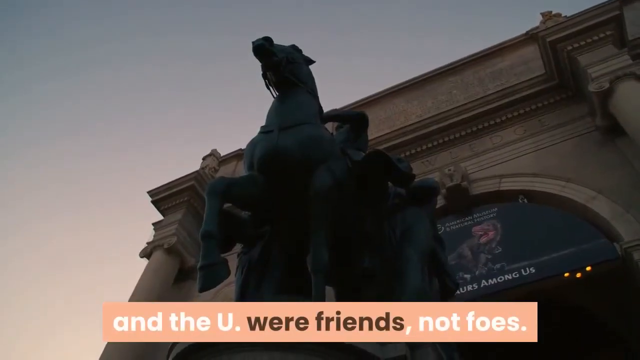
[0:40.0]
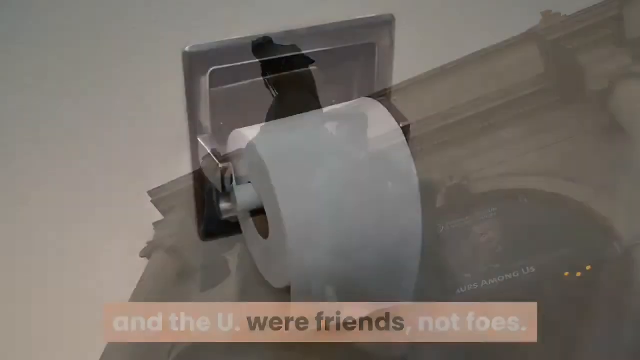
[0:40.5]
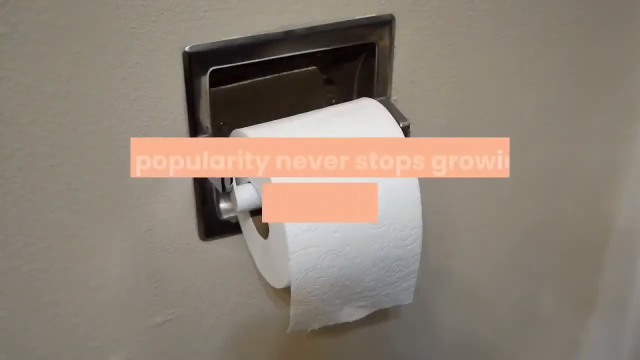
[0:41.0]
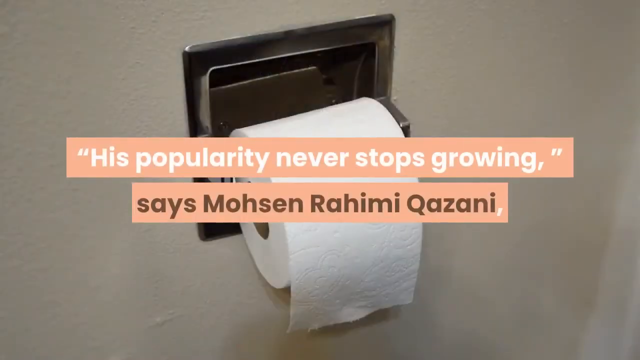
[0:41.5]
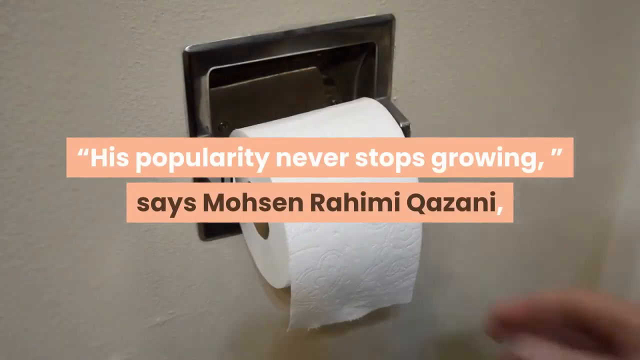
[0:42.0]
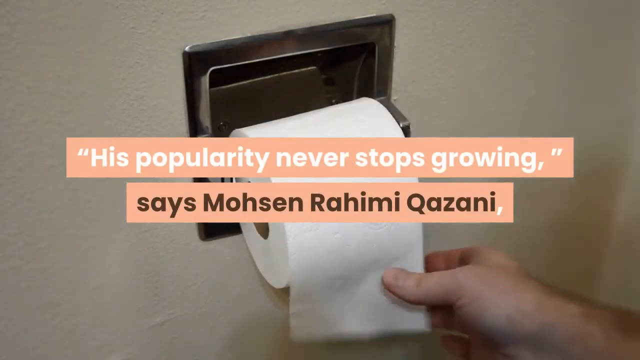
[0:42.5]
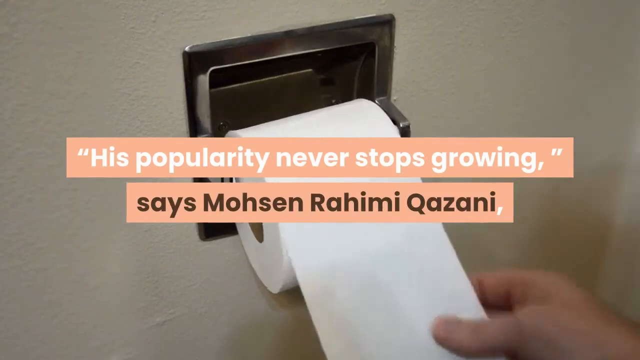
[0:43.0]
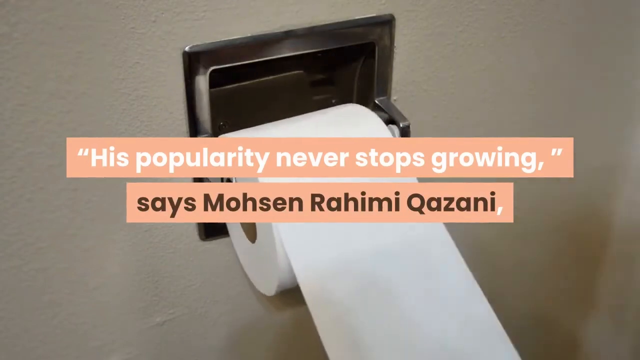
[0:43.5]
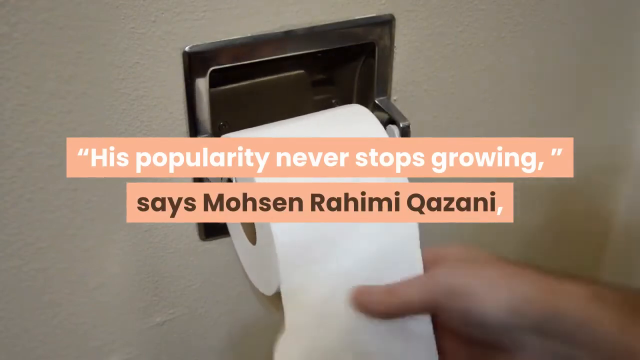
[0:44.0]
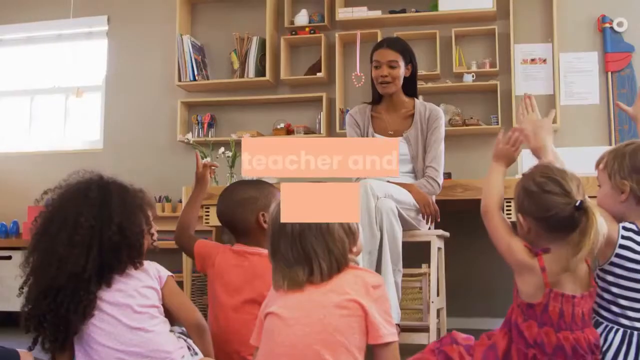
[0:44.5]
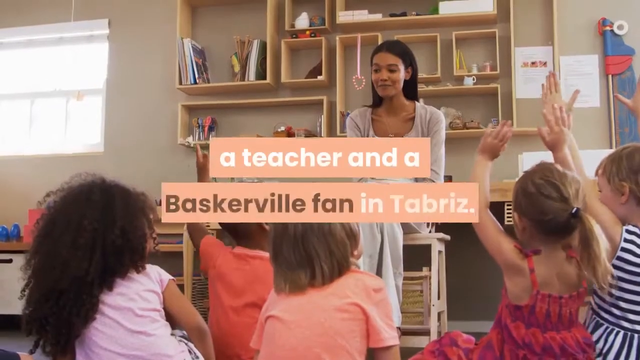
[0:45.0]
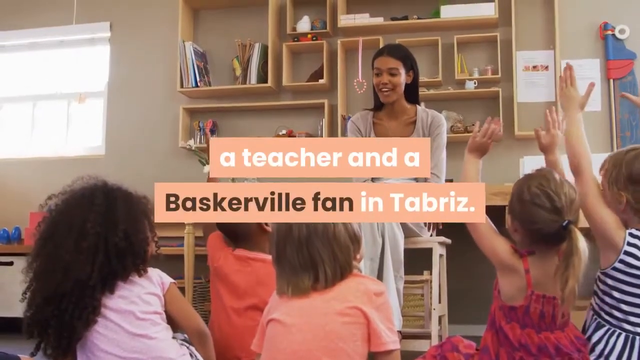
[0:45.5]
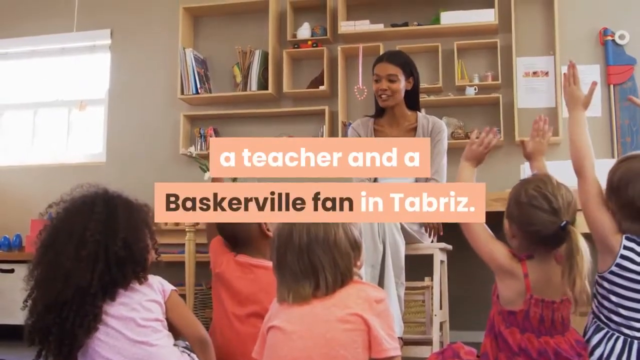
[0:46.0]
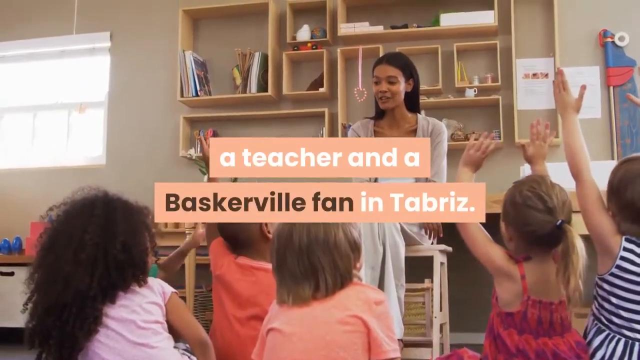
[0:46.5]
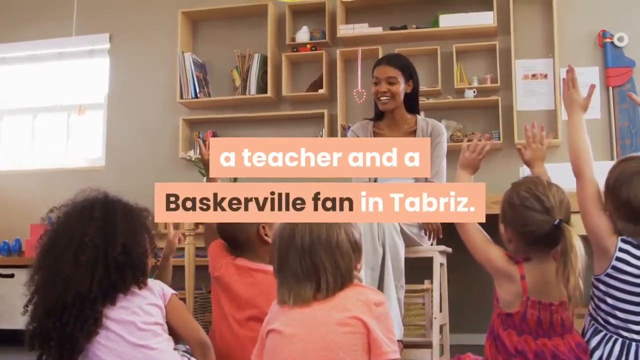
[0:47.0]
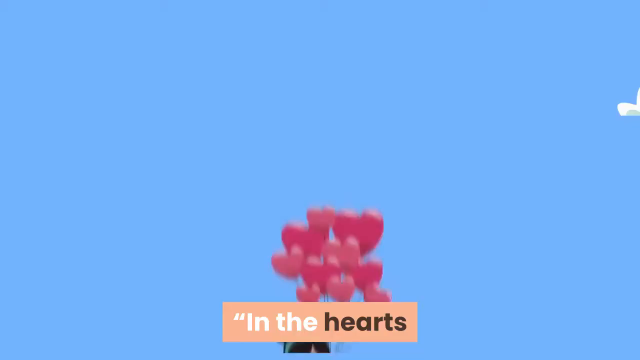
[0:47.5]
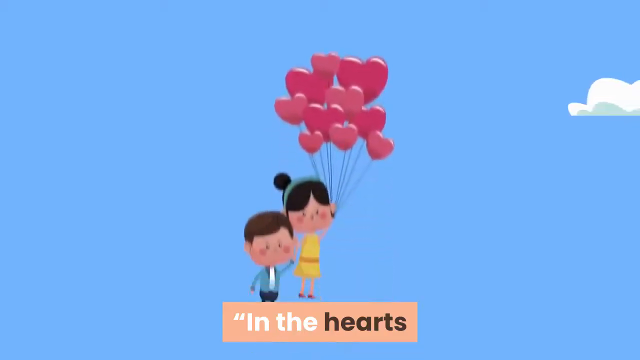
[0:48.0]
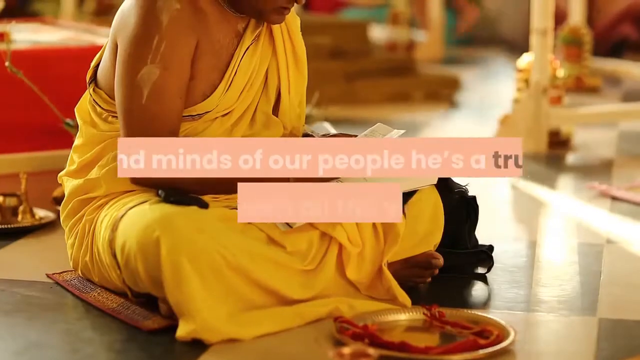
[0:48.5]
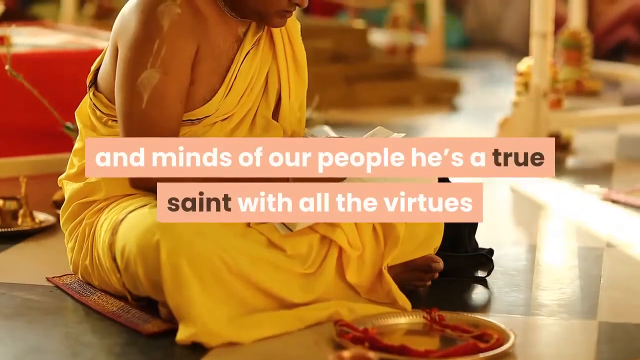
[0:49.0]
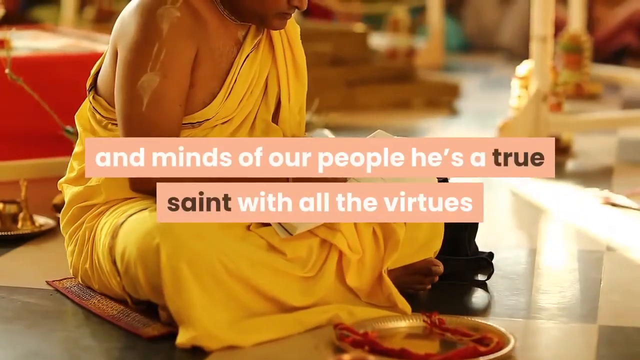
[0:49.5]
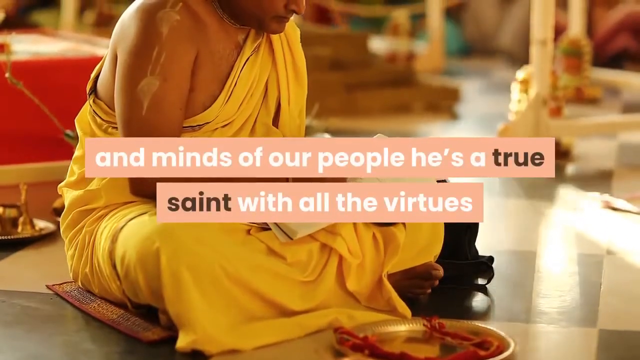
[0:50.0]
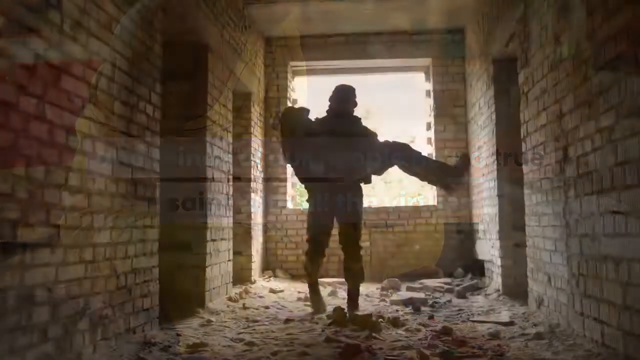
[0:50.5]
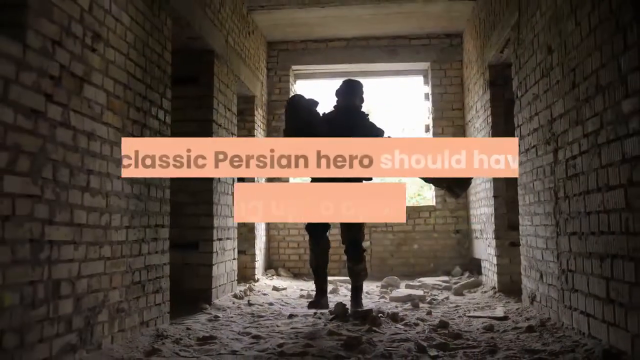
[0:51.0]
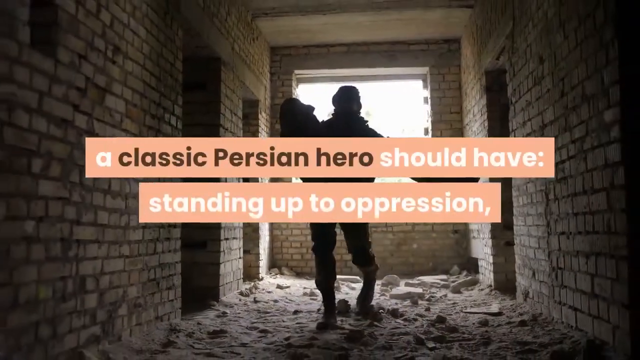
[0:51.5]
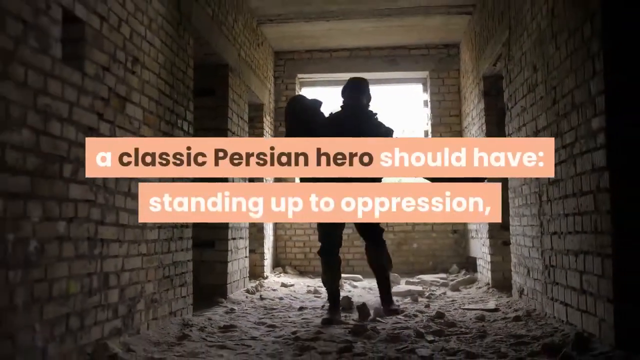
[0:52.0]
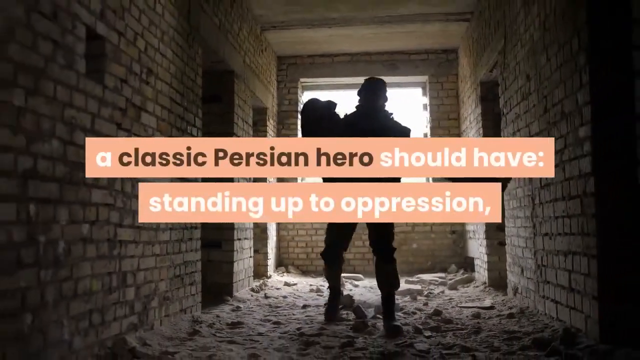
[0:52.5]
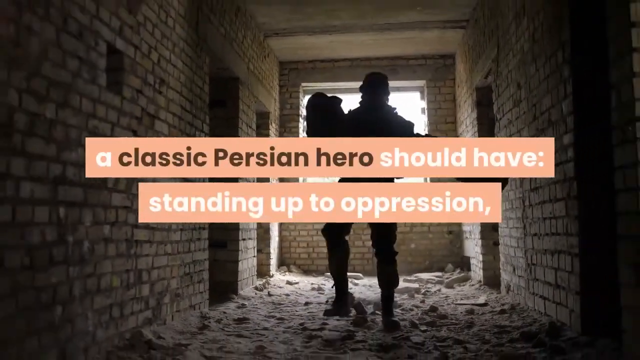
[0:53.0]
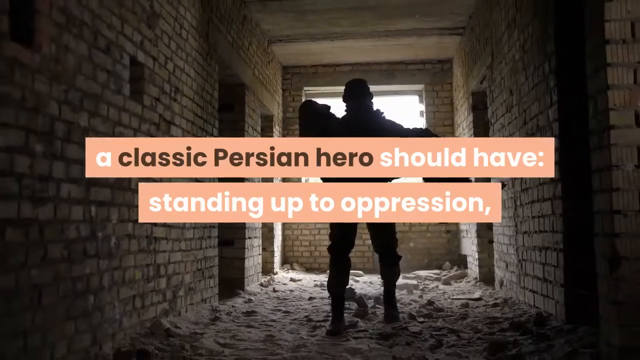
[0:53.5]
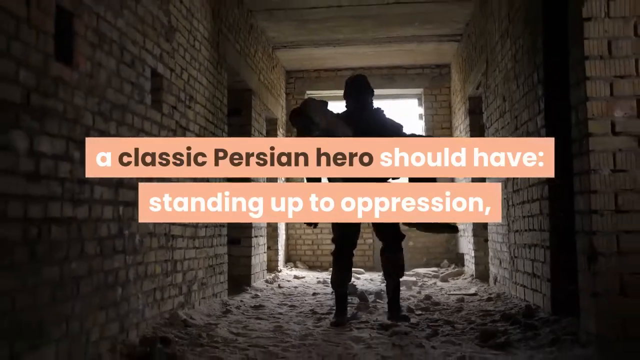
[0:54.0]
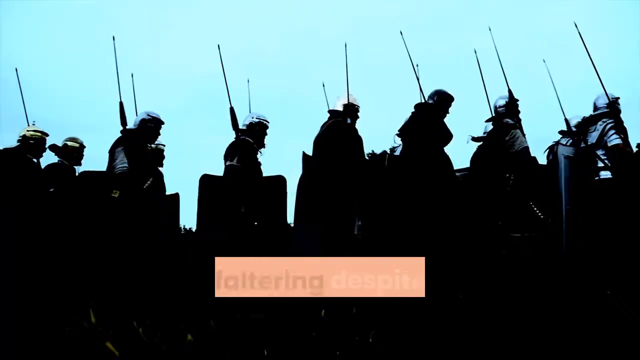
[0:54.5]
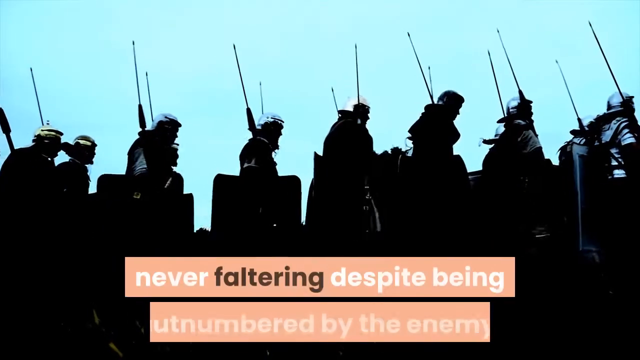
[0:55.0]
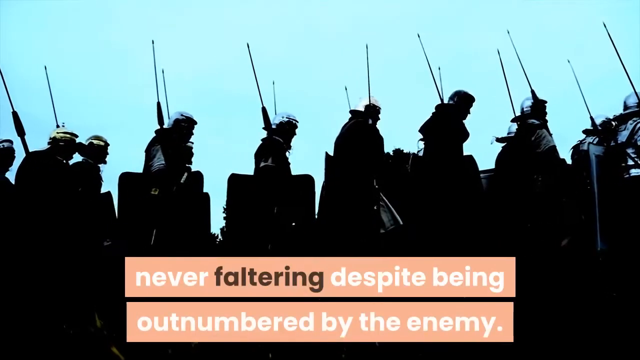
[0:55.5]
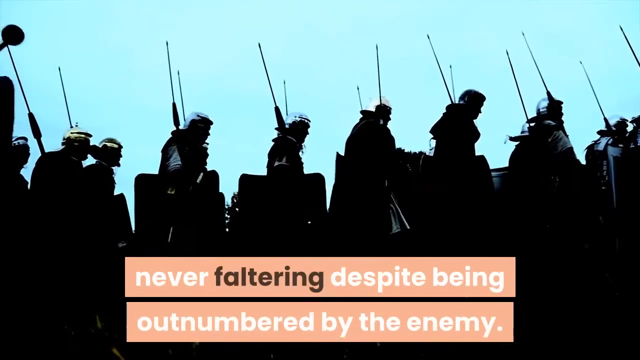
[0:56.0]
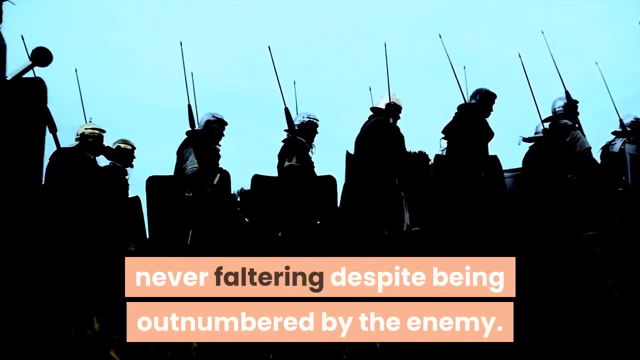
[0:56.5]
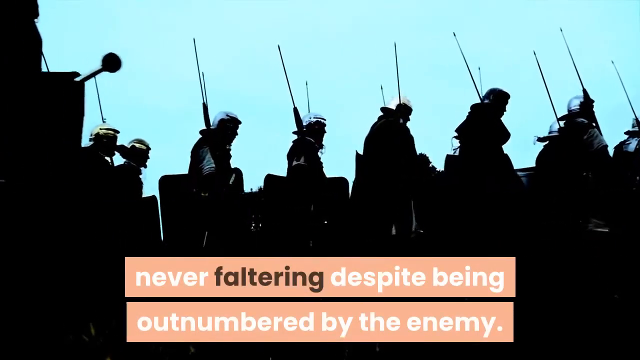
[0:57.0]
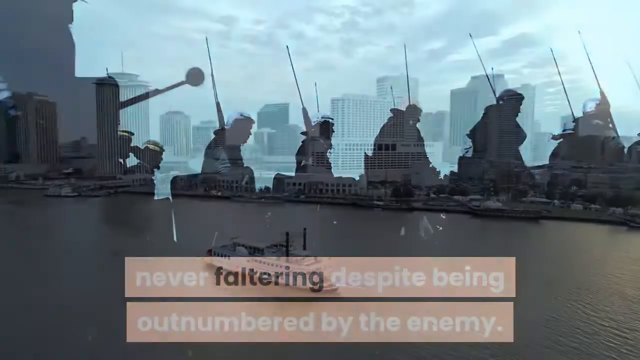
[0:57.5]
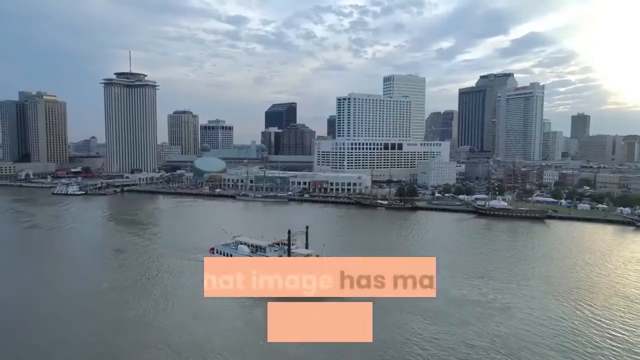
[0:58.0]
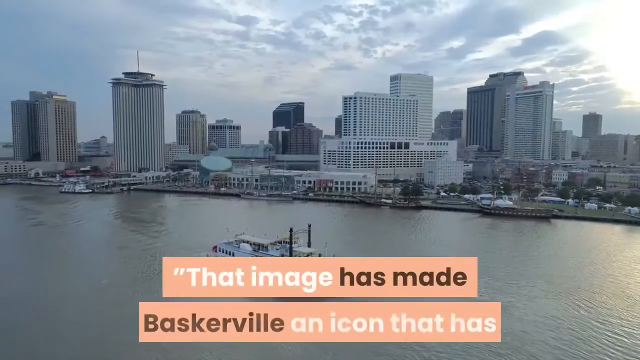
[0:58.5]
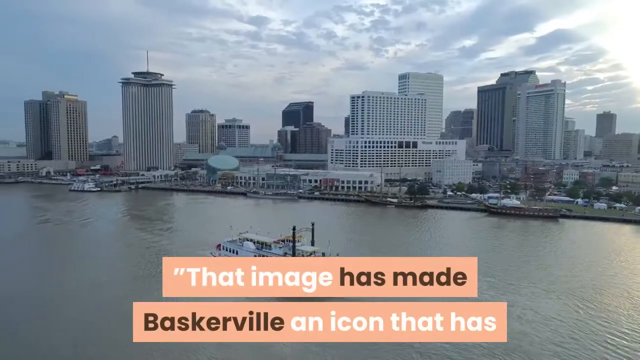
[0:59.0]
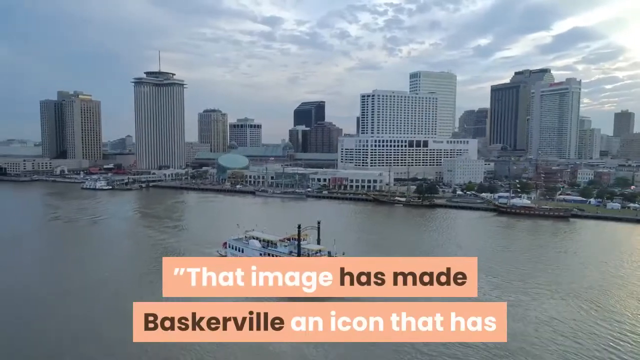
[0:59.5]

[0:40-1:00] The large modern building with the statue of a man on a horse appears to be some kind of museum. The scene changes to a roll of toilet paper hanging on a wall as a person reaches for it to unroll some paper, then to a teacher sitting on a desk in front of a classroom of small children, some of whom raise their hands. Next is a cartoonish image of two children holding a balloon rising toward the sky. Then come scenes of what appear to be Buddhist monks; only one is seen clearly, wearing yellow robes and sitting cross-legged. A soldier in shadows carries a figure through the rubble of a hallway as brick walls crumble around. Soldiers march, looking like Roman soldiers. Then a boat goes down a river, followed by an American flag. Words going across the screen describe how Howard Baskerville is loved by the Iranian people and seen as a classic Persian hero.